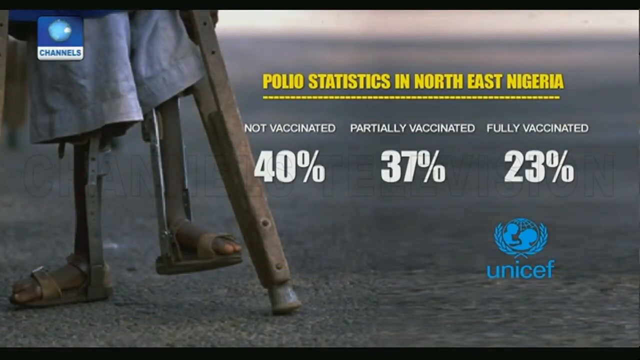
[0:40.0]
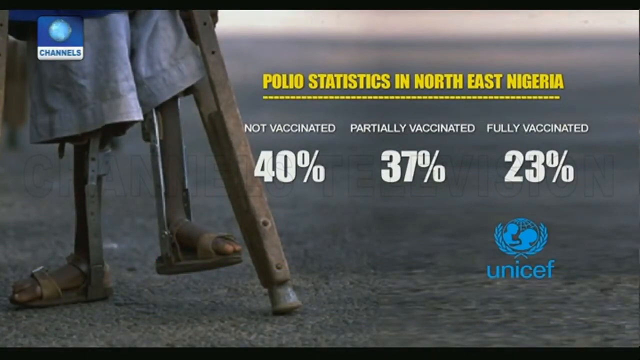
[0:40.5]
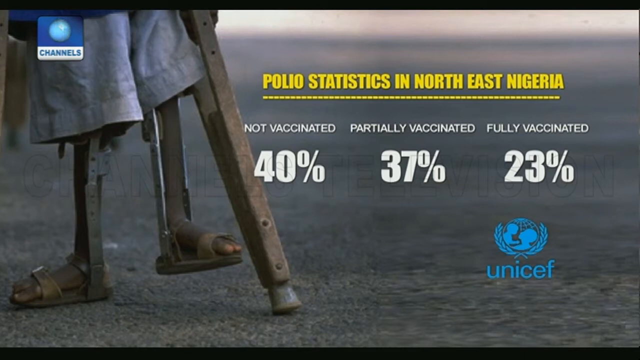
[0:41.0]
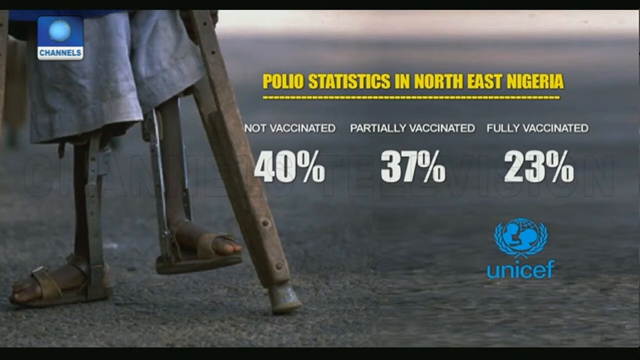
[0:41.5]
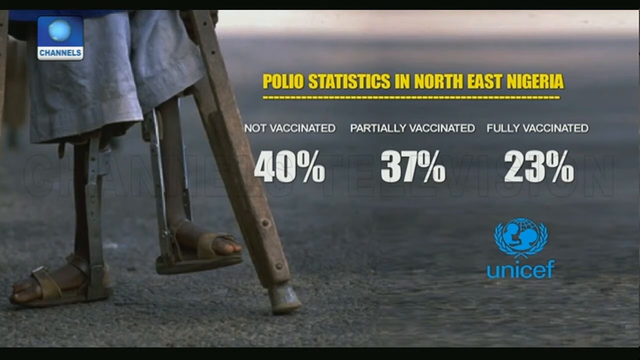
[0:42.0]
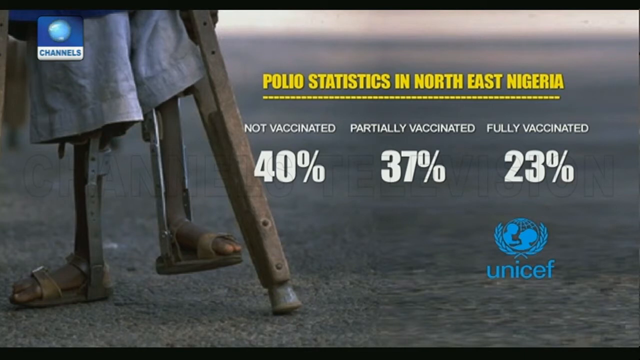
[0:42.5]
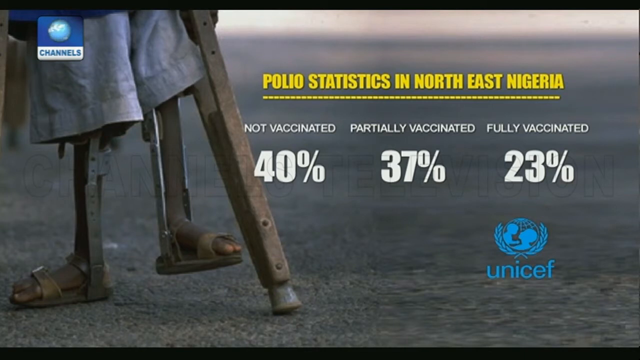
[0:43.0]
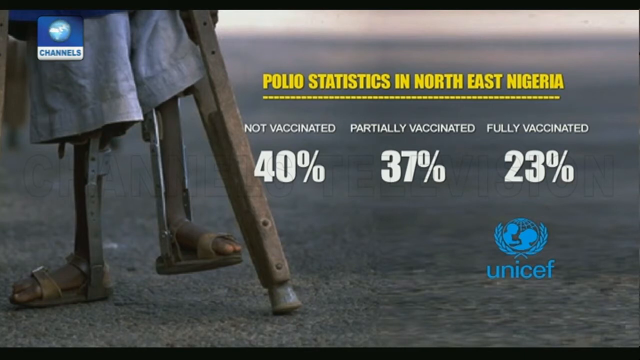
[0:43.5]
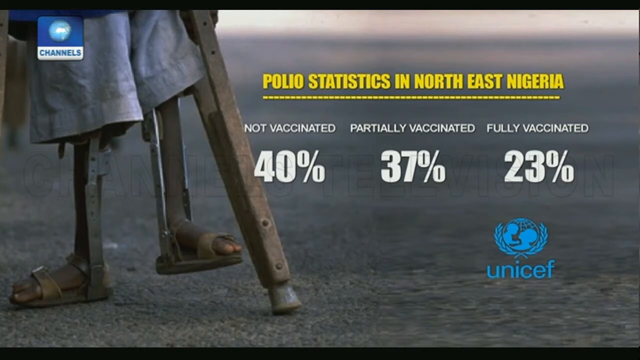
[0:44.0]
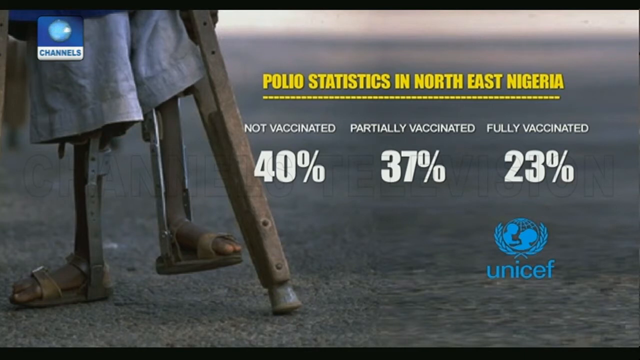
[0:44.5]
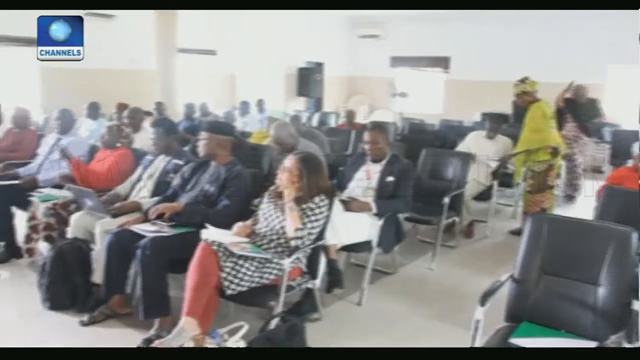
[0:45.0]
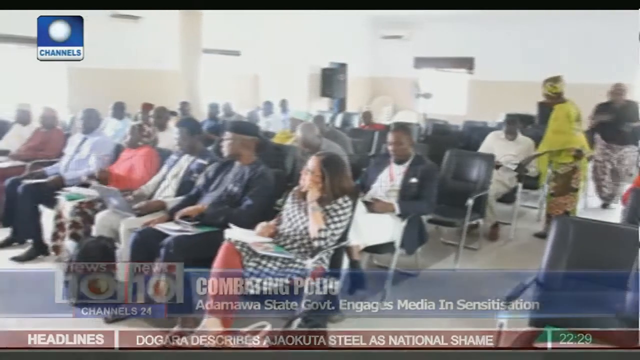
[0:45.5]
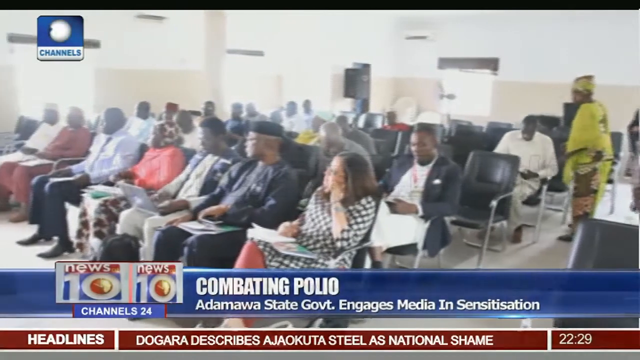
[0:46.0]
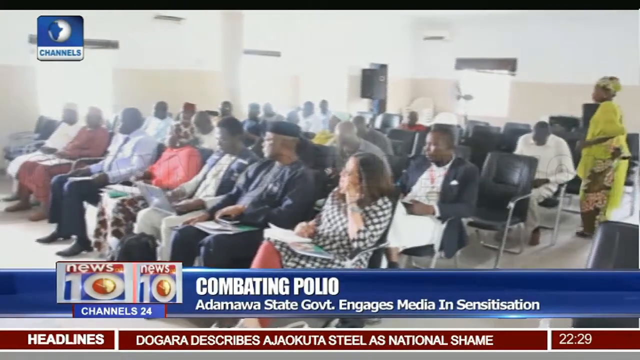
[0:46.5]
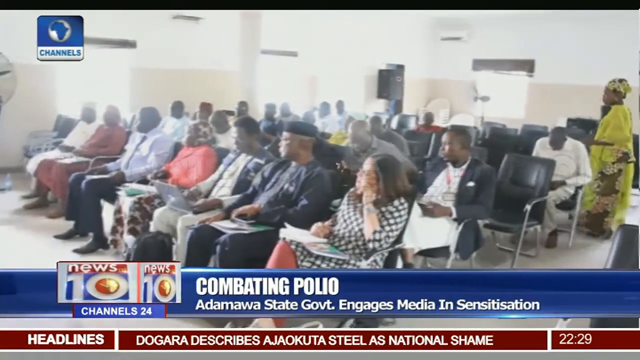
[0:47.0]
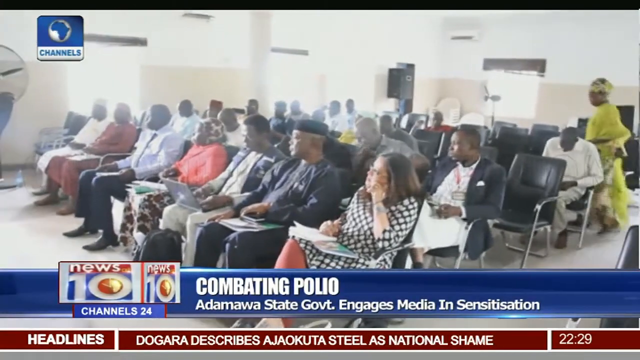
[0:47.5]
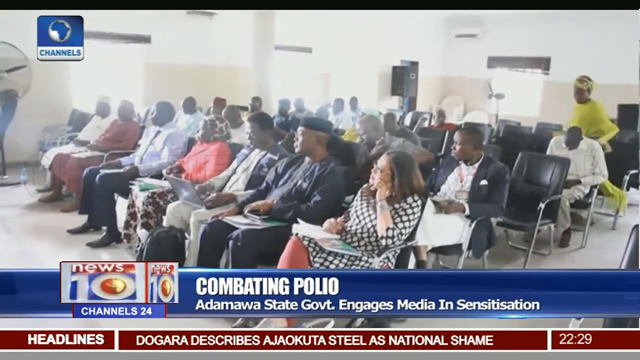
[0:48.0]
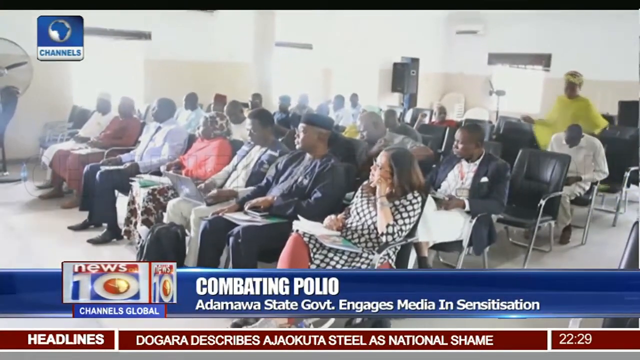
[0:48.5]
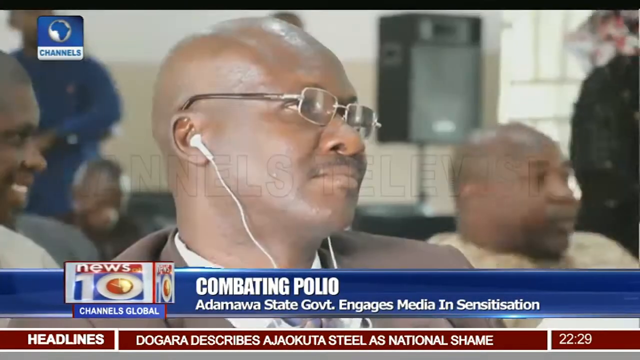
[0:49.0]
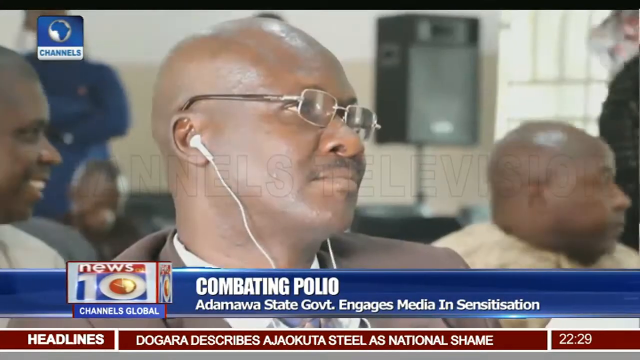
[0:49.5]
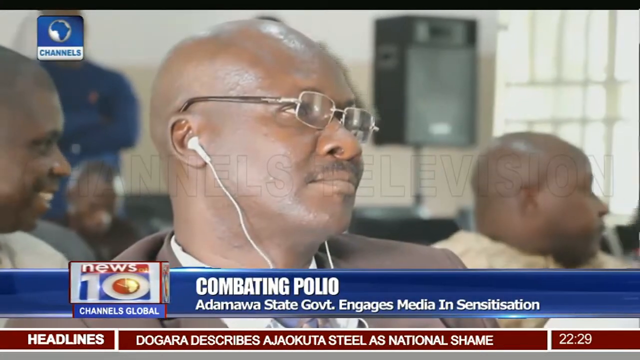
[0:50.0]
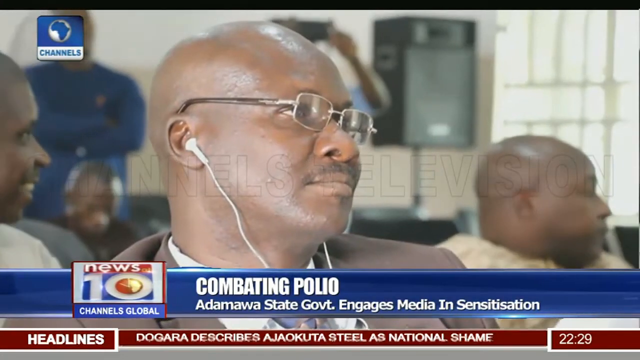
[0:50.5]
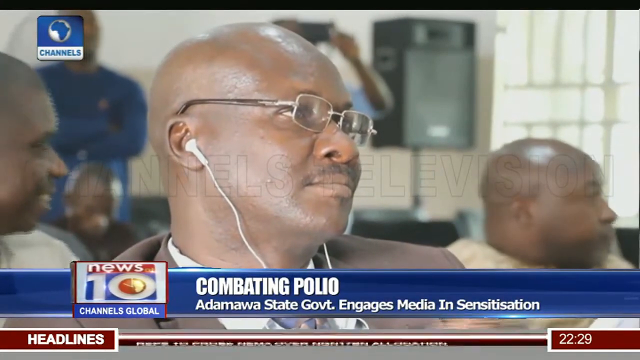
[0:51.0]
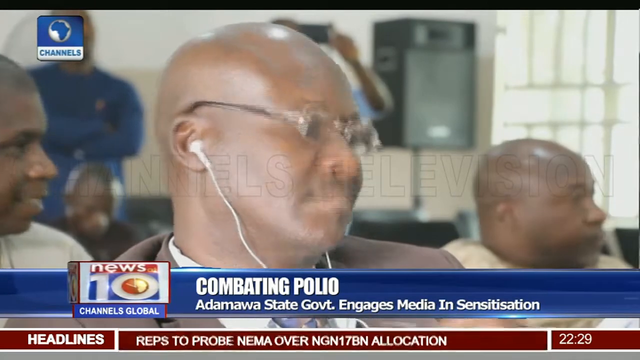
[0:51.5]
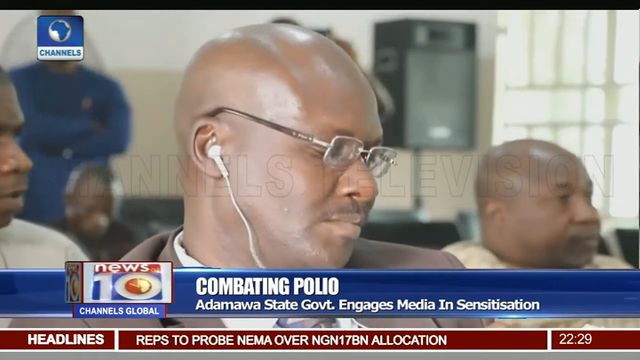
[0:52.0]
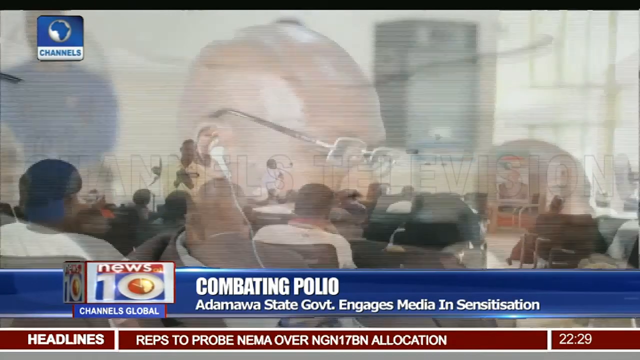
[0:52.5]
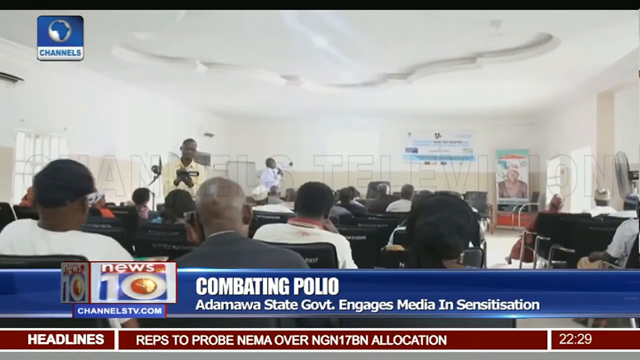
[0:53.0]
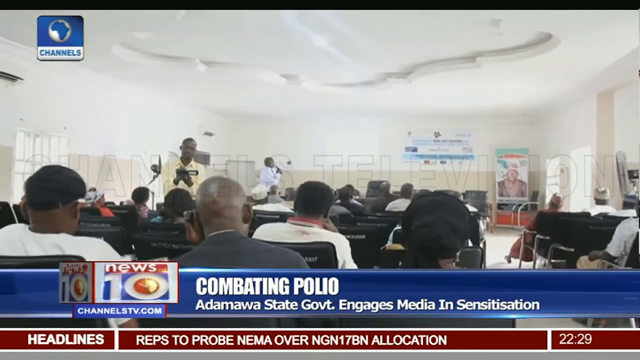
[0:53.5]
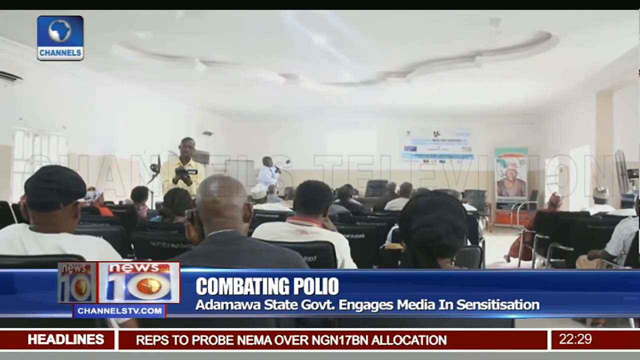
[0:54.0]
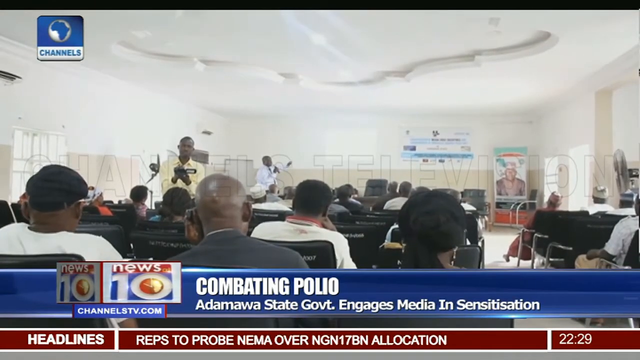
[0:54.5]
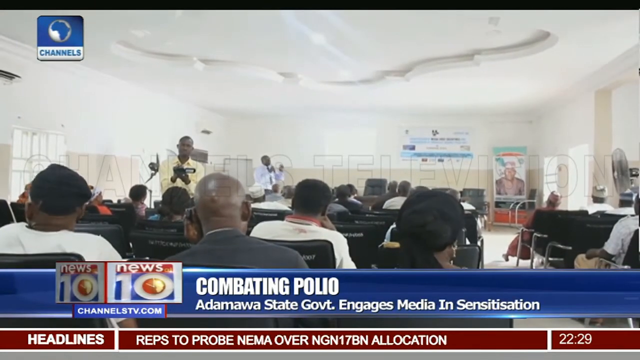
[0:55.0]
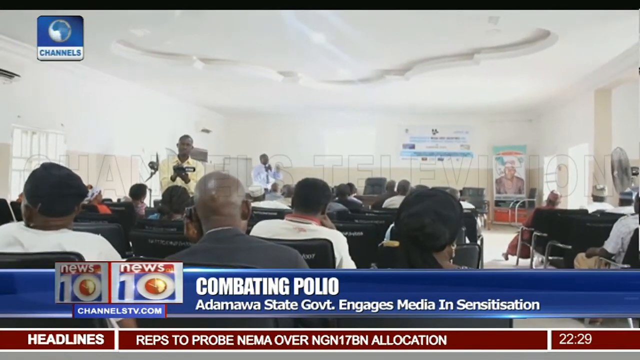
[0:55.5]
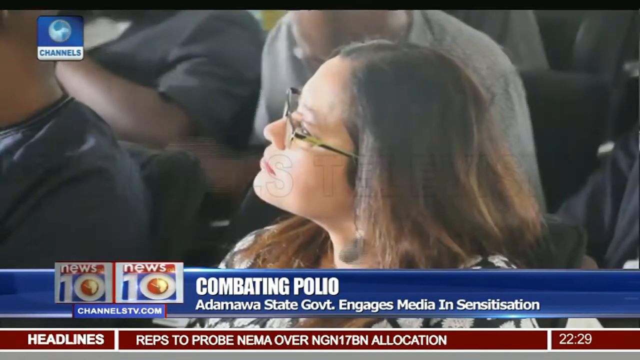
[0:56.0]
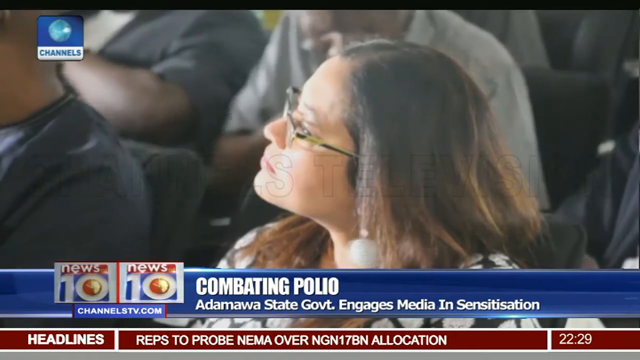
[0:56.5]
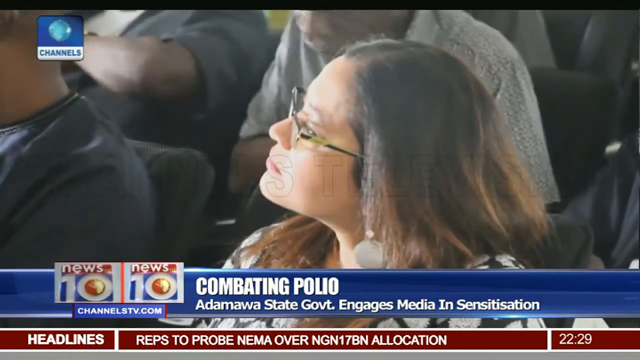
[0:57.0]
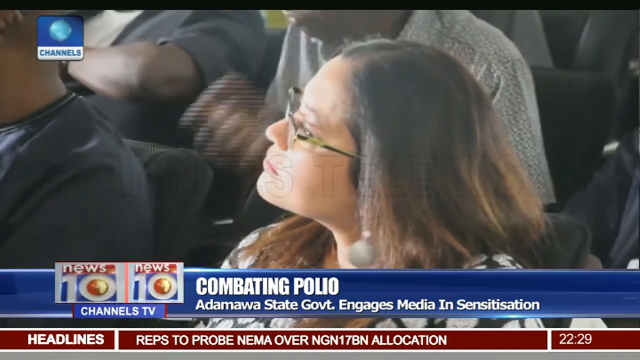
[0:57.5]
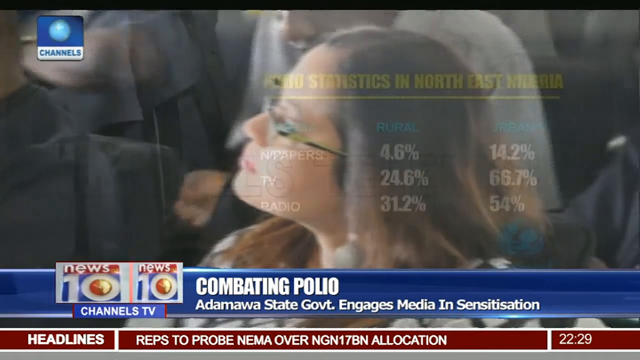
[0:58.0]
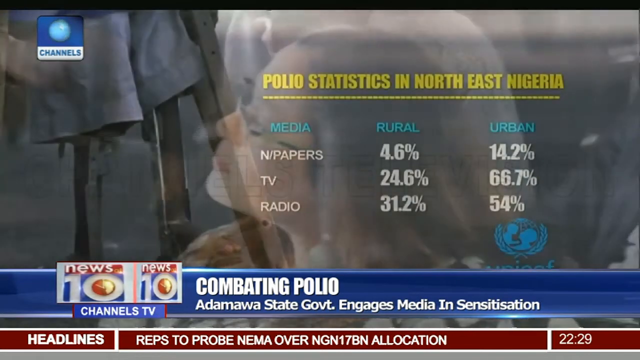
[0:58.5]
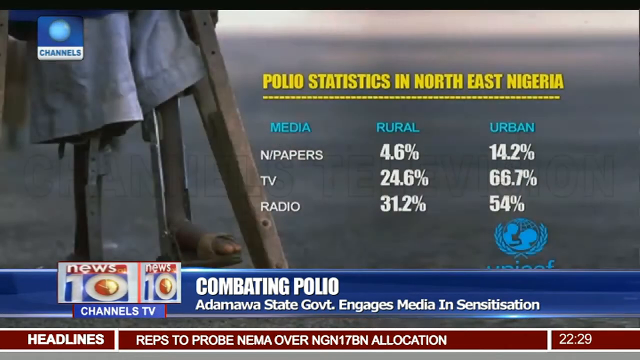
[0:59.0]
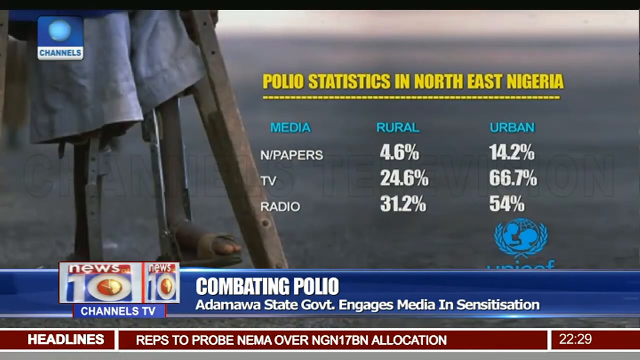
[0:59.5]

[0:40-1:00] Footage continues of children who end up unable to walk. Local government people then hold a discussion in a conference, with people visible in the room. Statistics on polio in northeast Nigeria appear on screen again, showing 37% partially vaccinated and 23% fully vaccinated. People in the conference room continue discussing the issue, and media papers and information are shown on a screen. The report is from News 10.